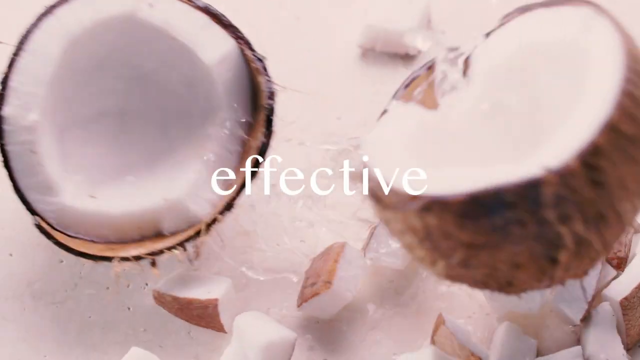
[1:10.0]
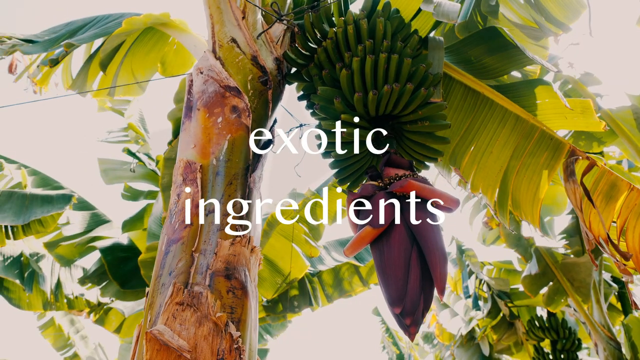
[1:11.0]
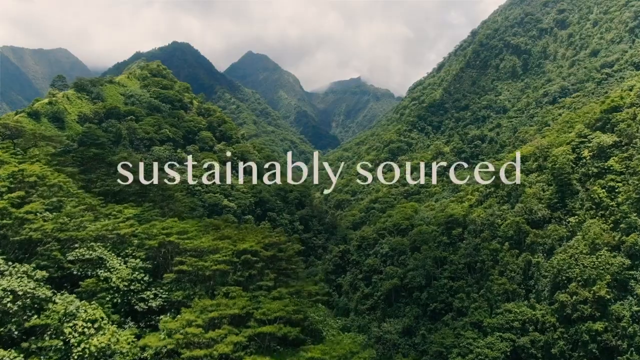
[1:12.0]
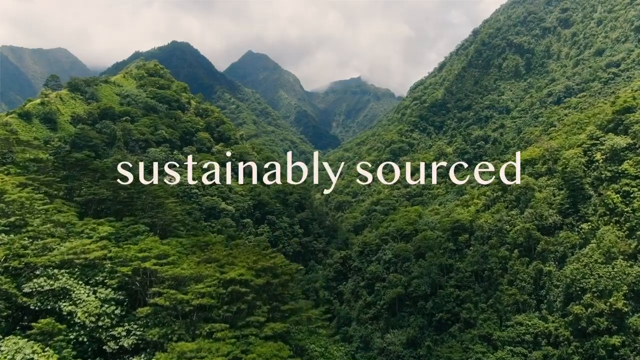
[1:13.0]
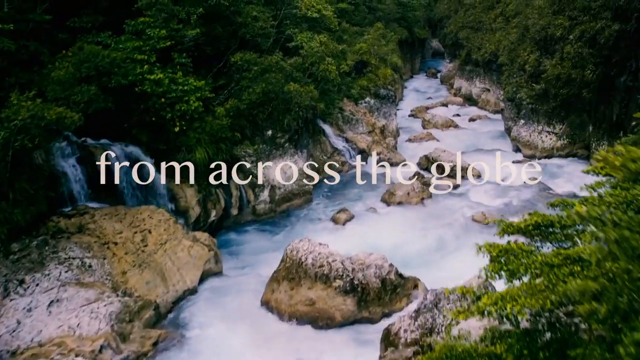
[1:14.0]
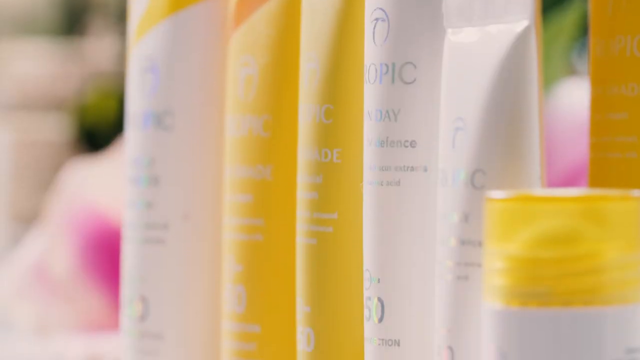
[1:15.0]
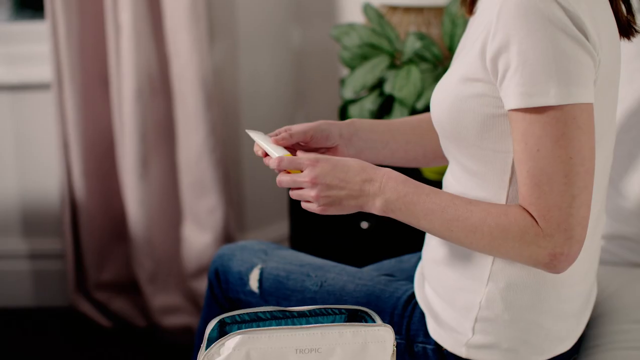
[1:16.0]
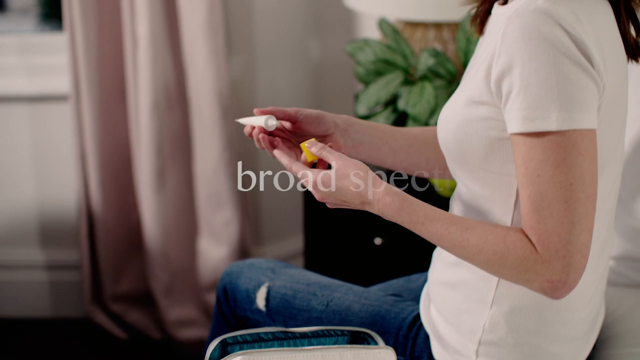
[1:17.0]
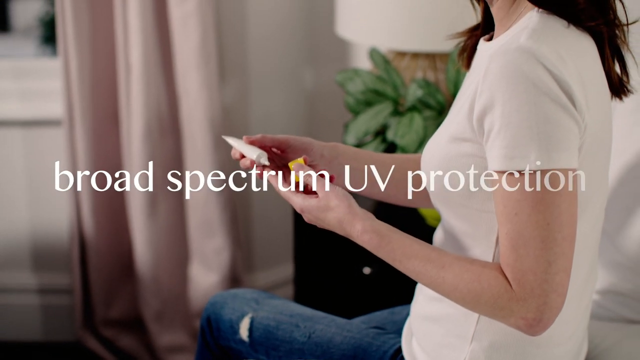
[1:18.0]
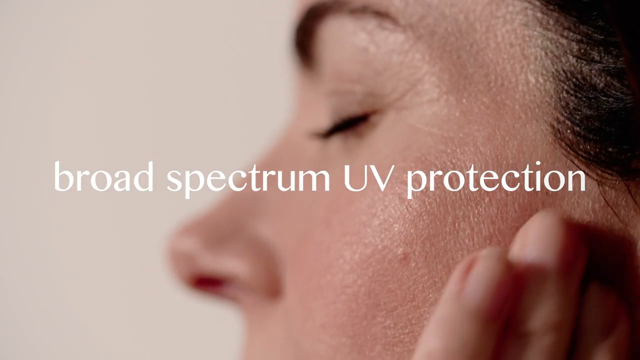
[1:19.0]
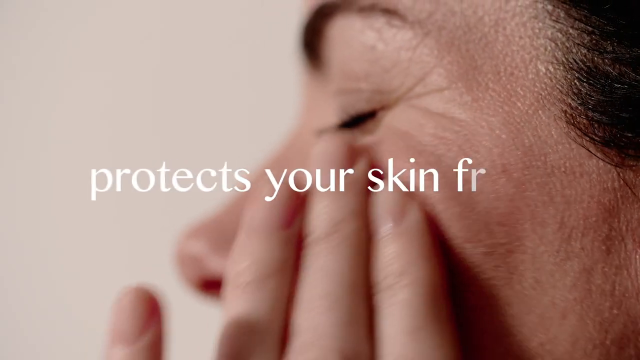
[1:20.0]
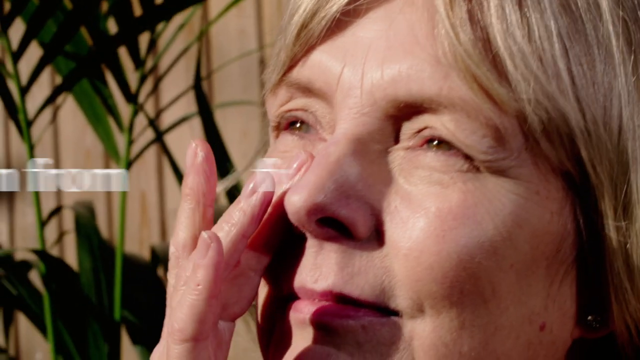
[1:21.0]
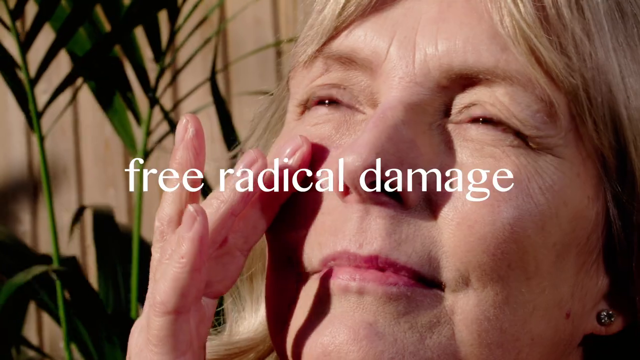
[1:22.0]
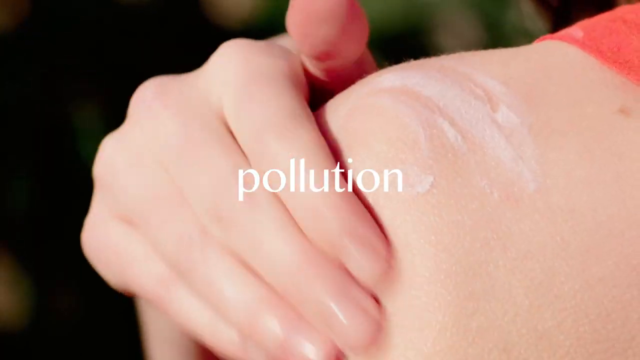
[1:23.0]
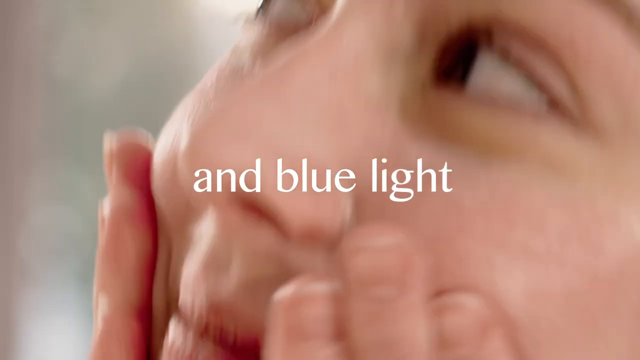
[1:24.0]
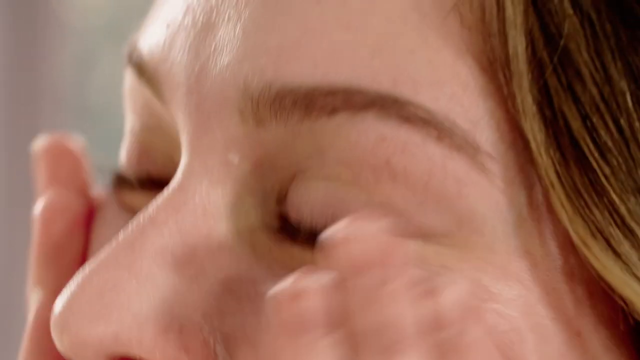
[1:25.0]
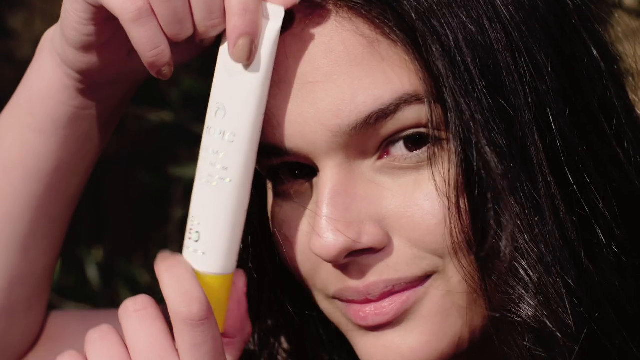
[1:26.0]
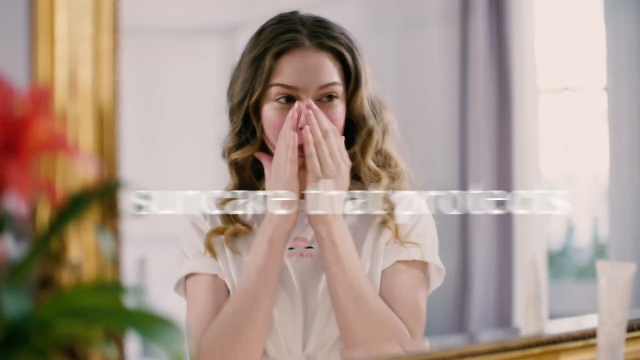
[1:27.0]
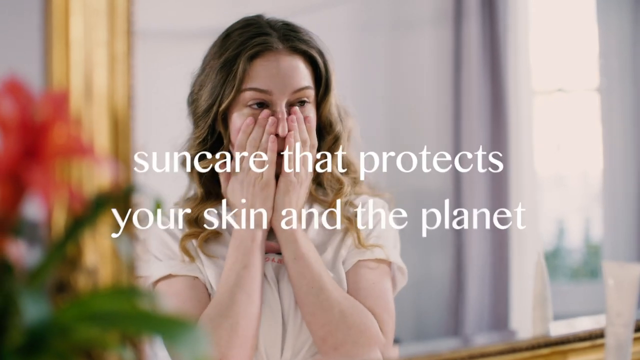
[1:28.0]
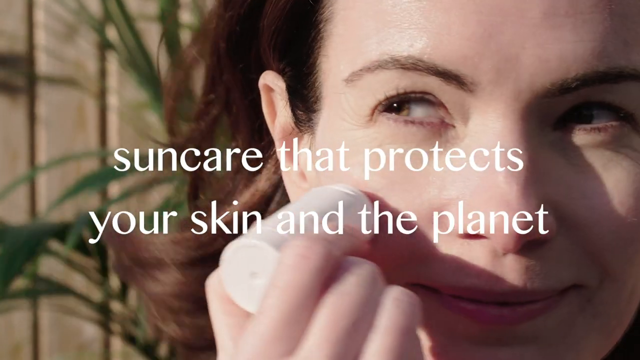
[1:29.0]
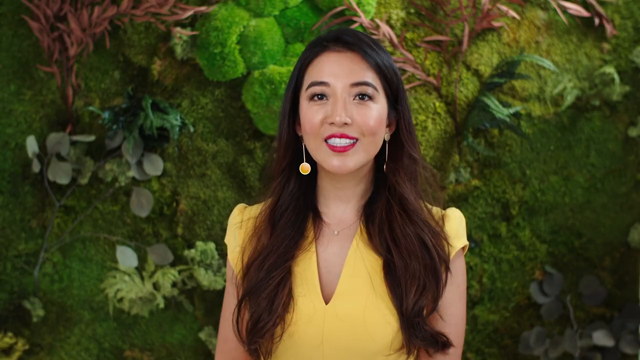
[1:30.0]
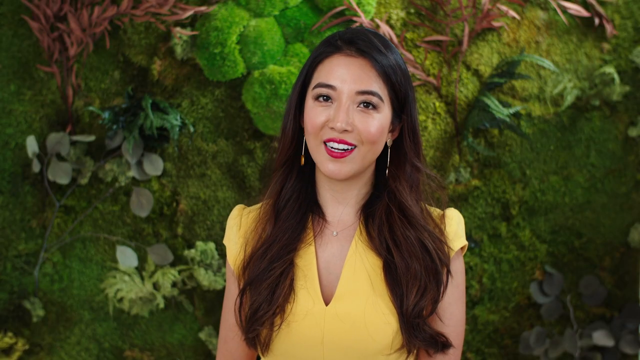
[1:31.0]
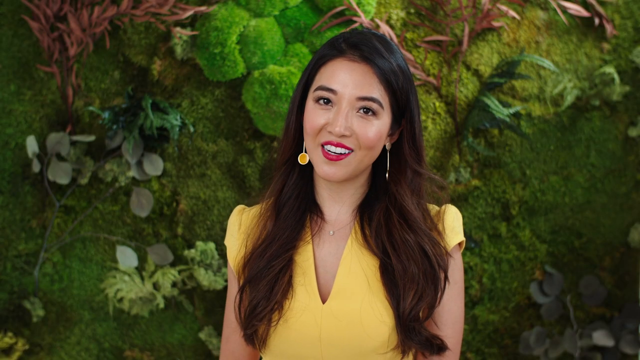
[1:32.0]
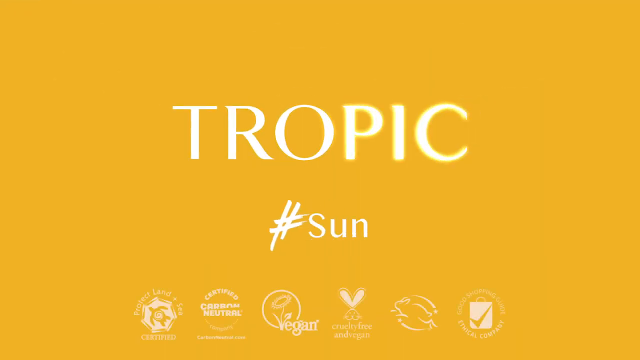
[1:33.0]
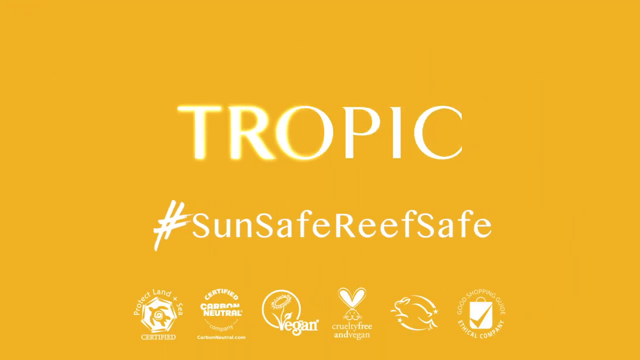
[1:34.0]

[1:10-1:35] A close-up shows a coconut split in half, with one piece on the left and one on the right, and white text in the center that says "effective." The shot quickly cuts to a view underneath a tree with some fruit hanging down, and text across the center of the screen says "exotic ingredients" as the camera slowly pans right. The scene then transitions to a forest area on mountains, with "sustainably sourced" in the center as the camera pans forward through the forested mountain valleys. The next shot shows a forest with a river running through it, and white text says "from across the globe." The video then quickly transitions to a side view of Tropic tubes of cream, containers and bottles as the camera slowly pans down.